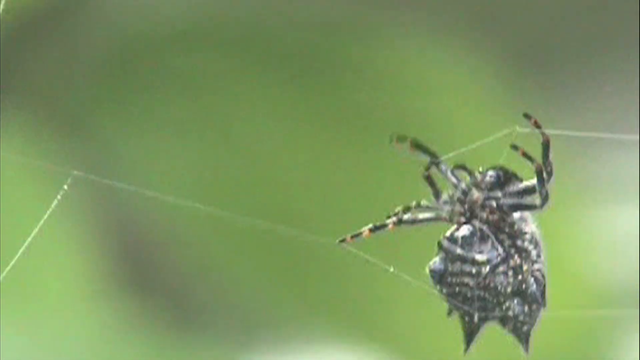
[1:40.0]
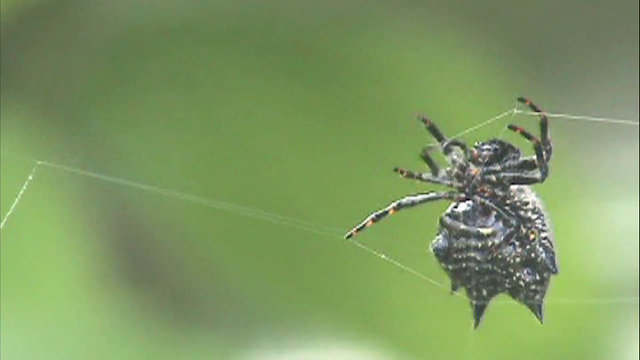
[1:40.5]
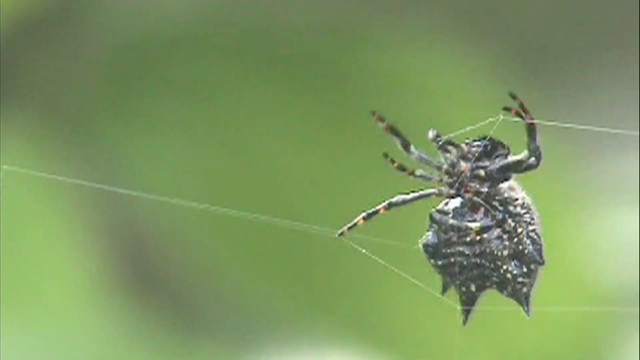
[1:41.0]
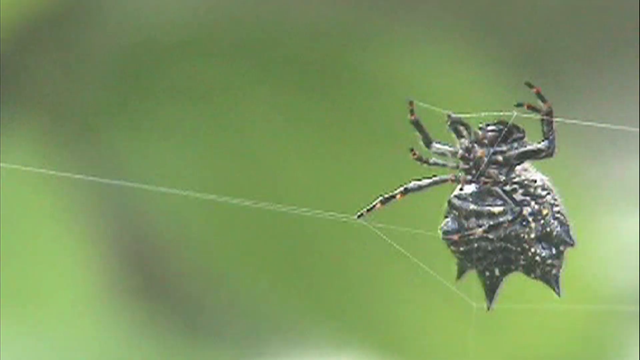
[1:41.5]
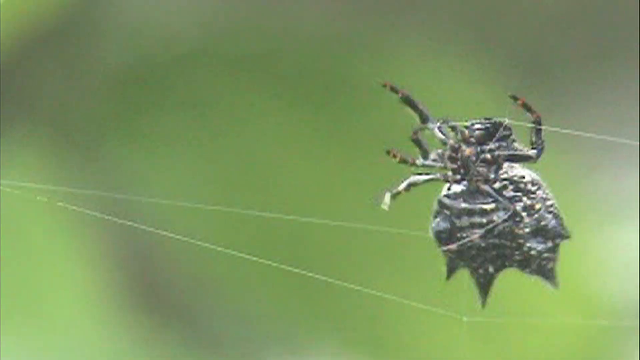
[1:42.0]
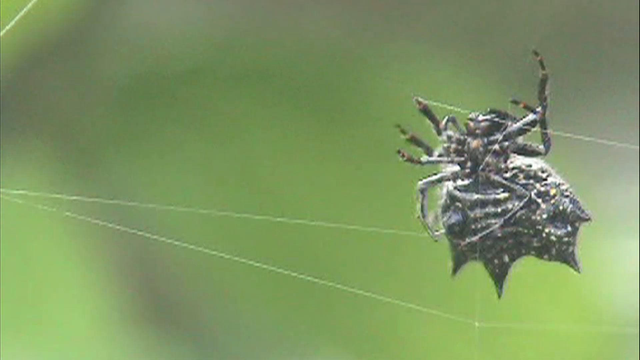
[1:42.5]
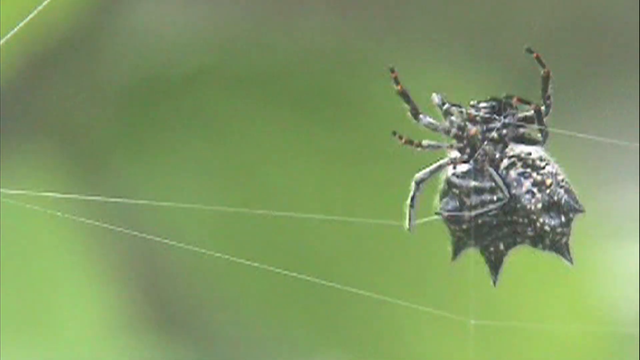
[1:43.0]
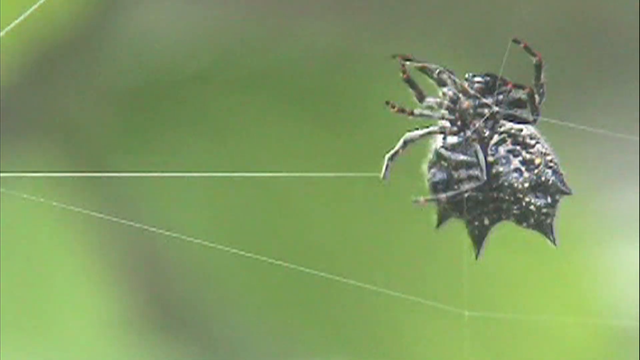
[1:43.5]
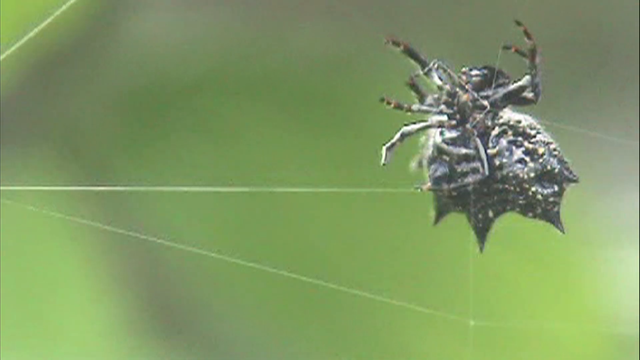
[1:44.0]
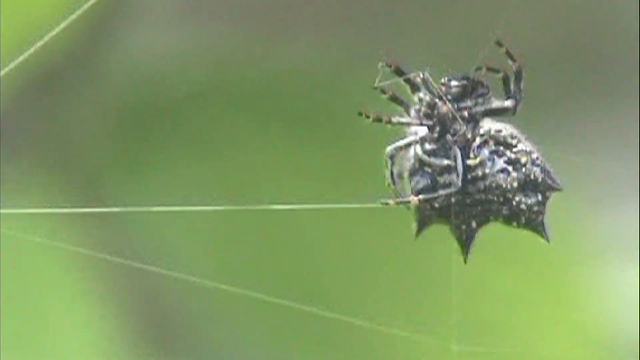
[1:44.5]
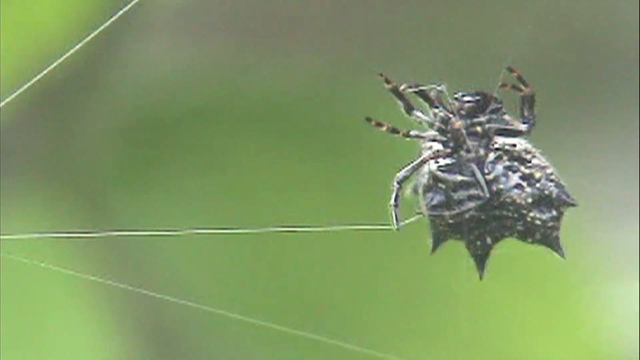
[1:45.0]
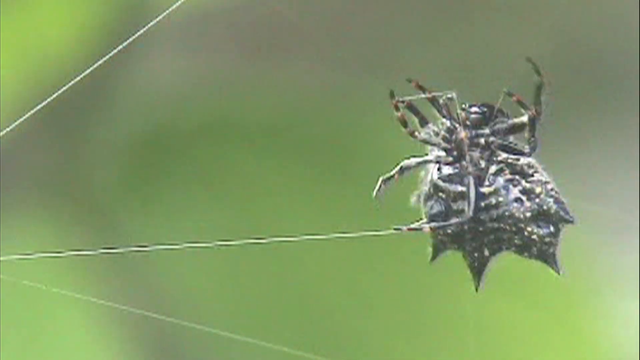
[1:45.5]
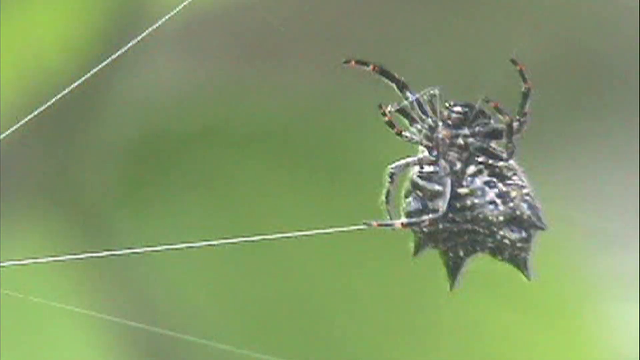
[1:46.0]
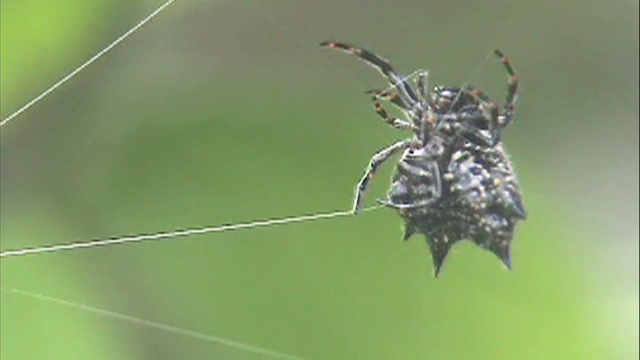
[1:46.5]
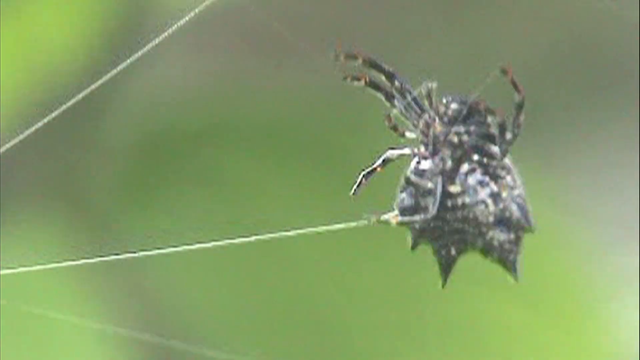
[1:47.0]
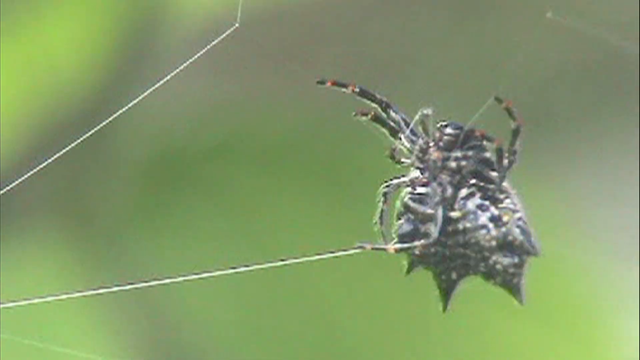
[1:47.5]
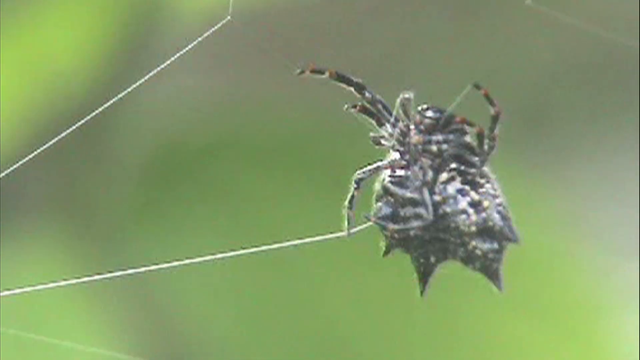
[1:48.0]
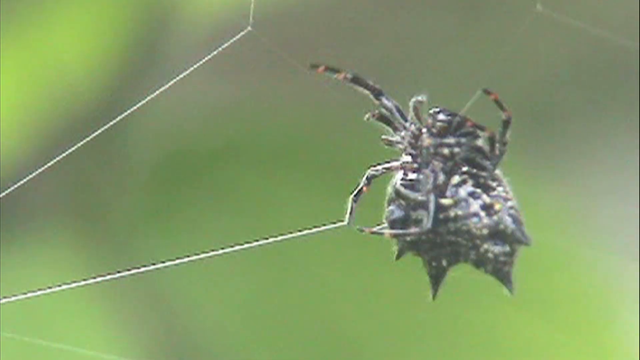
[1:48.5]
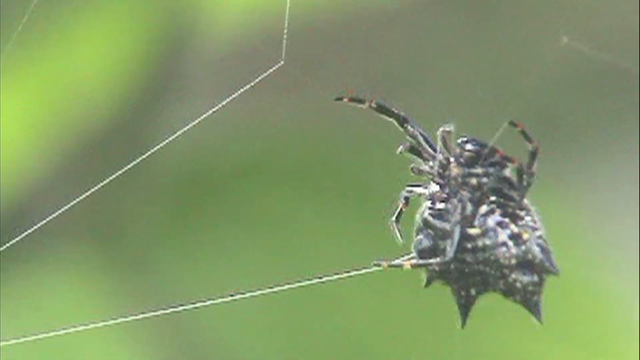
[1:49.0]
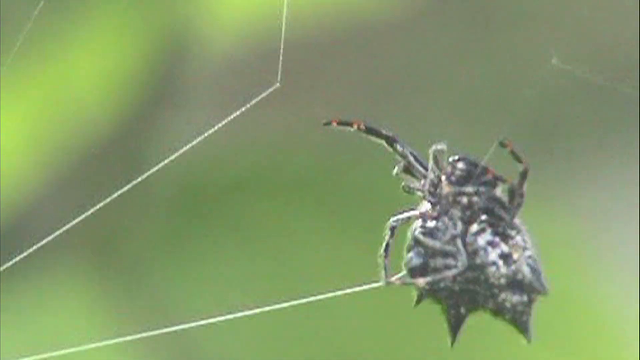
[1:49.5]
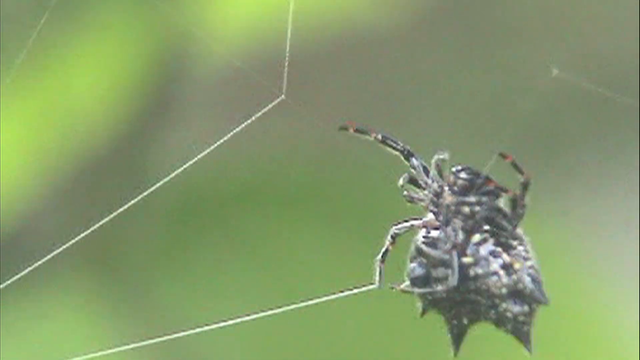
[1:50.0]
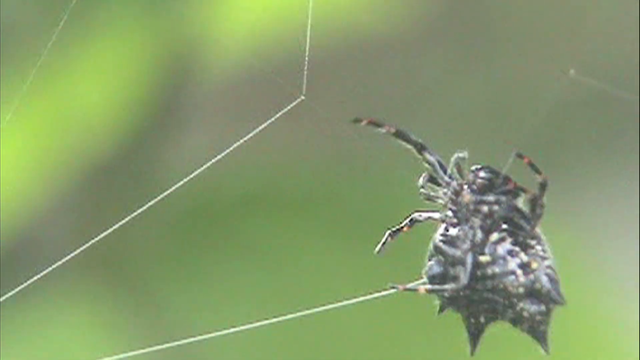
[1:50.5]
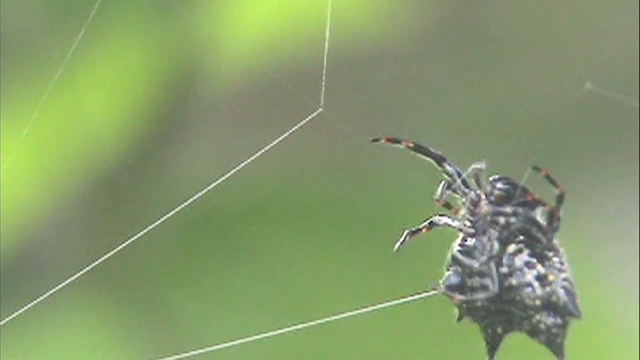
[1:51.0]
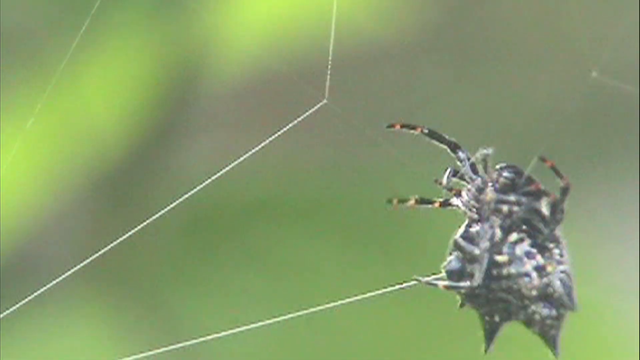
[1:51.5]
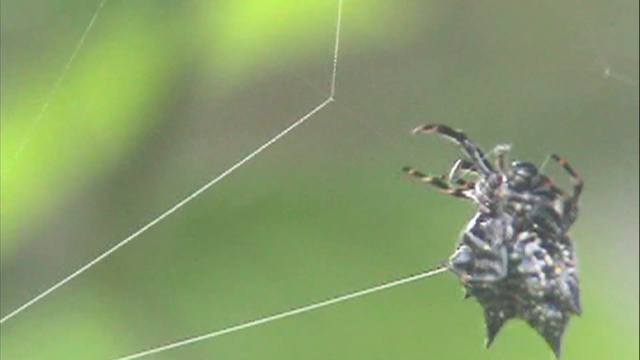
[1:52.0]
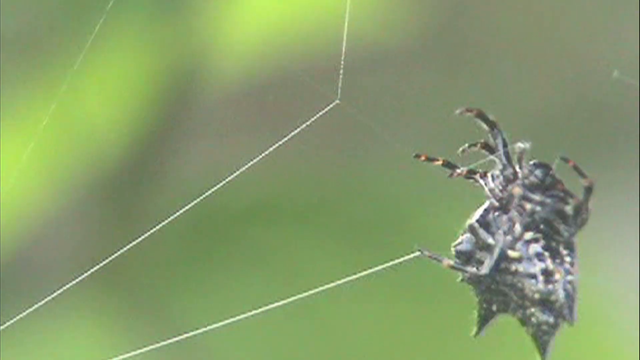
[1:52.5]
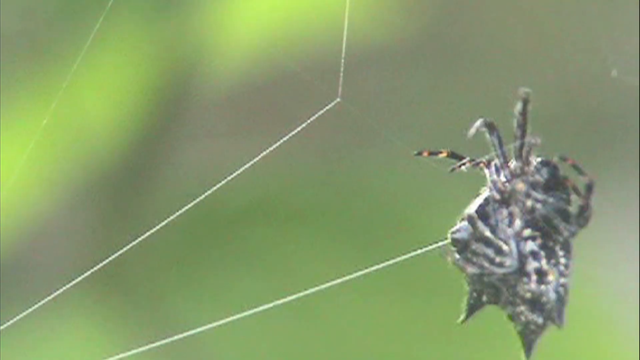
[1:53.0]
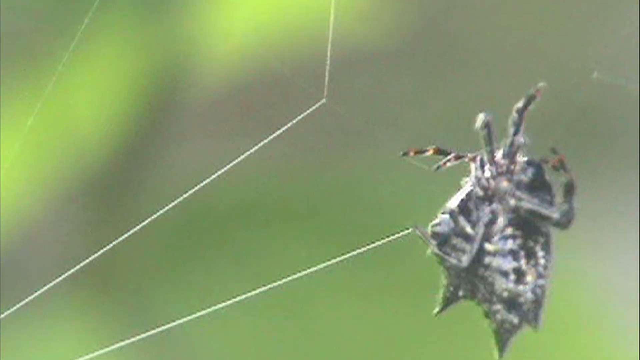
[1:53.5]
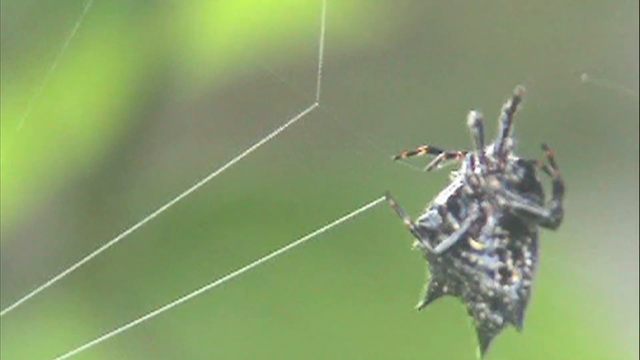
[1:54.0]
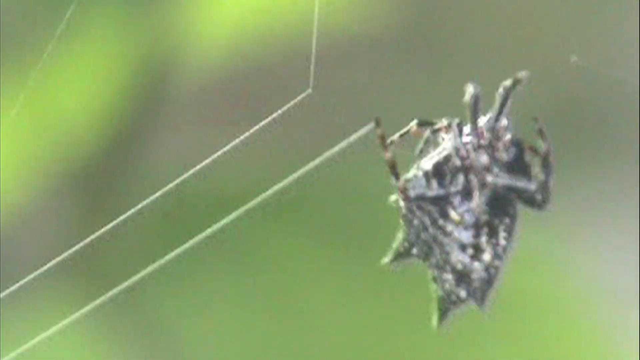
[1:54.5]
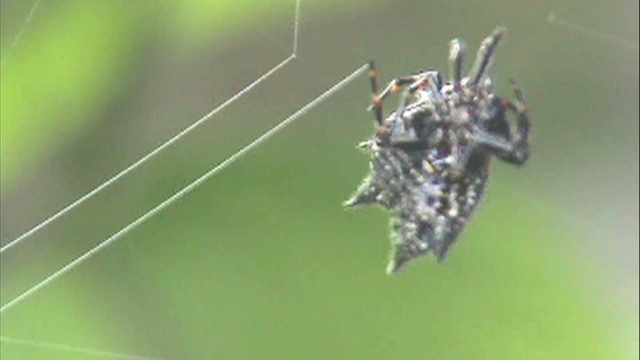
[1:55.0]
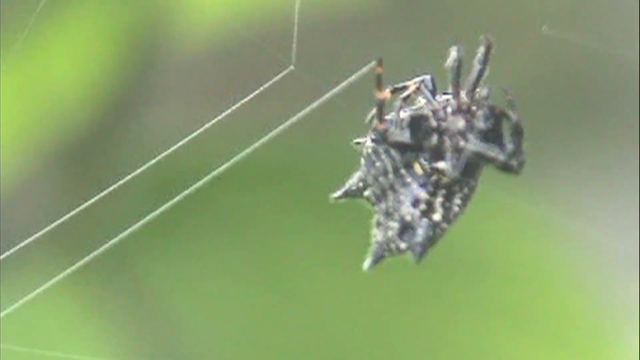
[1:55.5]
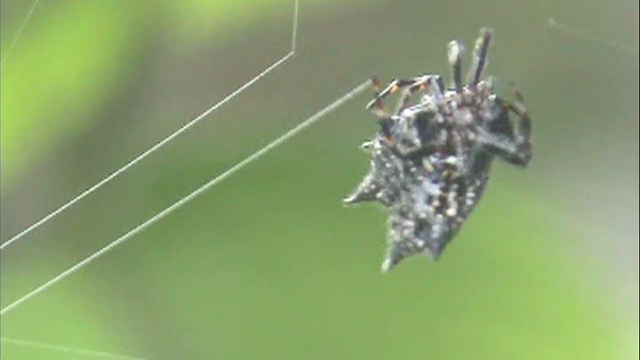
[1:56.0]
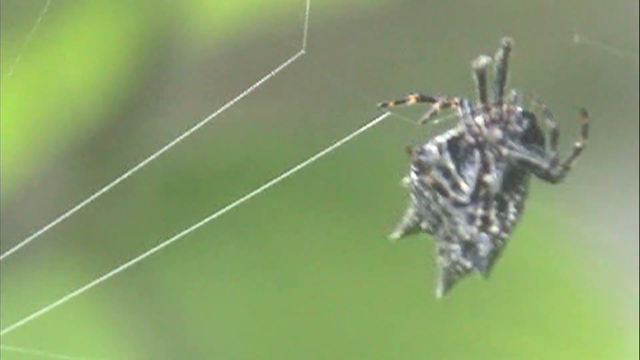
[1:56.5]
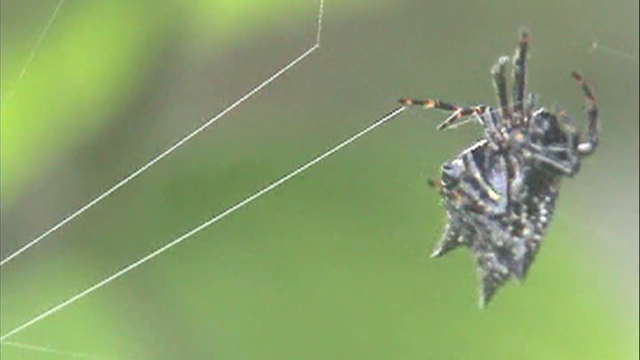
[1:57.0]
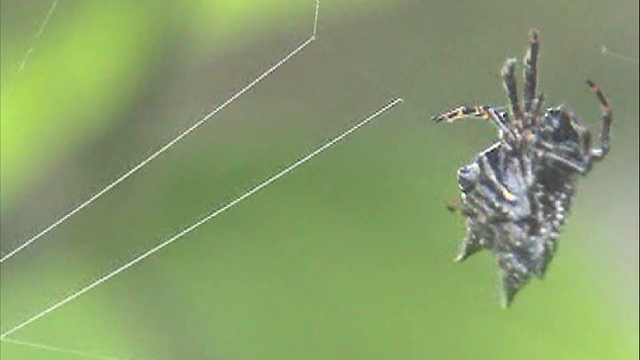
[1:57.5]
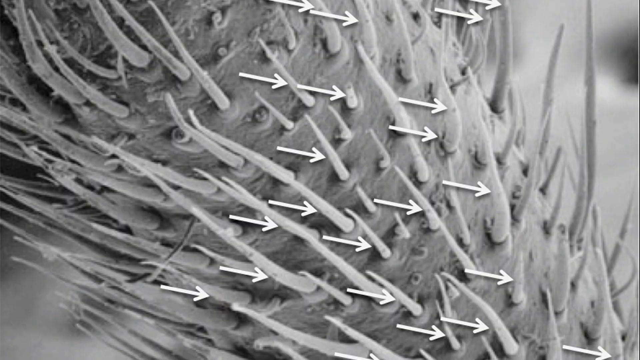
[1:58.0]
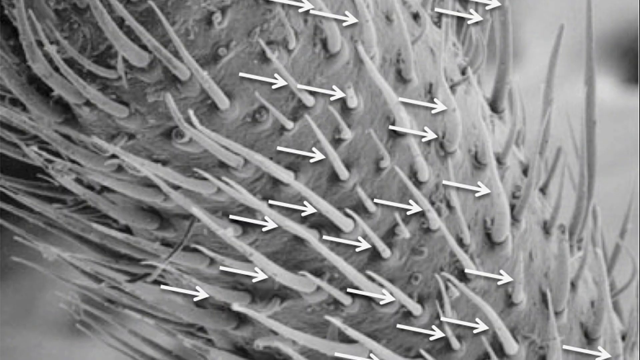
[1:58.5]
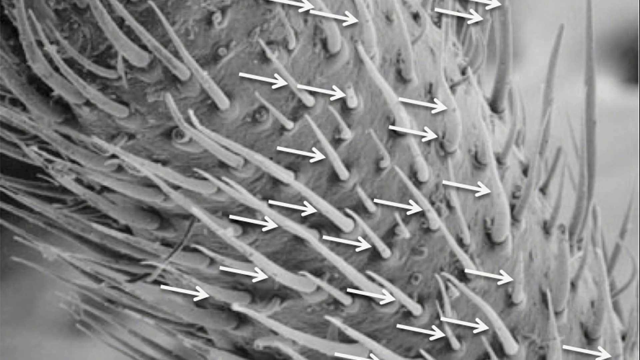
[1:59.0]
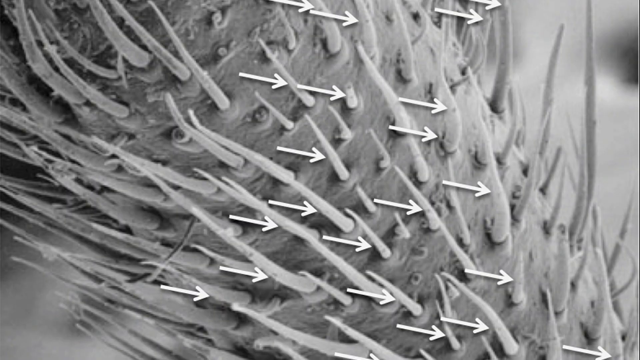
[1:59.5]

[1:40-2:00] A black and gray spider spins its web while sort of walking with its little legs, not sticking to its own web and able to traverse the area without getting stuck. A very close-up picture of the spider's legs shows many tiny hairs, with arrows pointing toward the right at the base of the hairs. The spider keeps moving upward and a little toward the left. It has two pointy points coming off the back that almost look like tails.